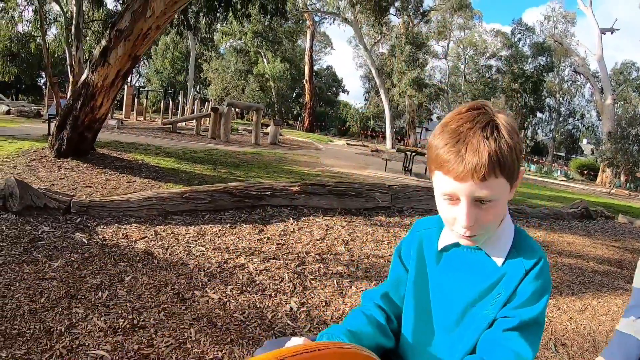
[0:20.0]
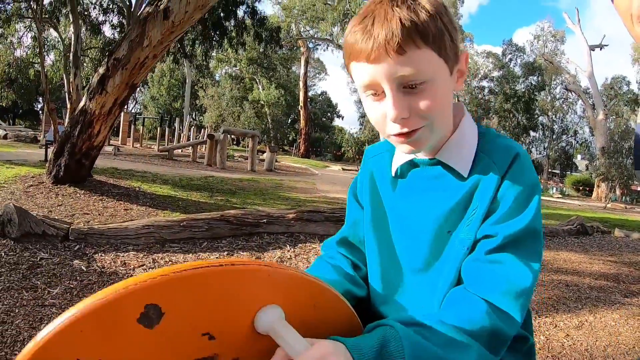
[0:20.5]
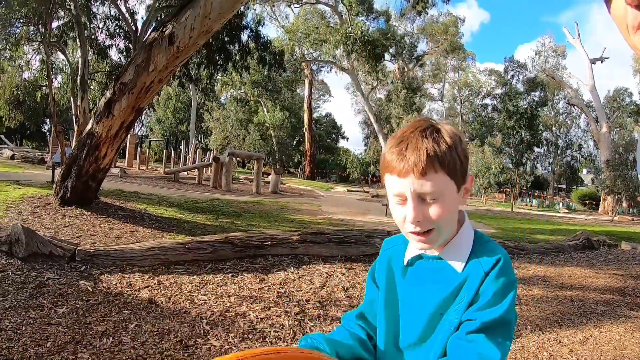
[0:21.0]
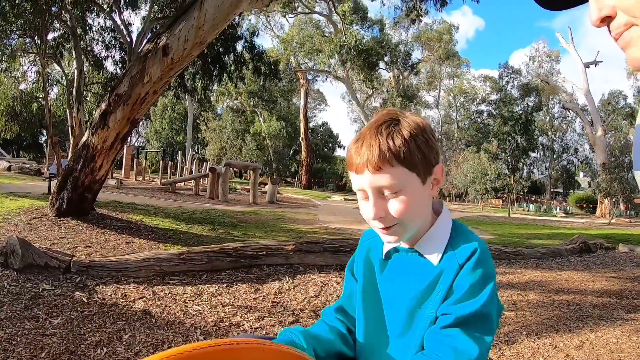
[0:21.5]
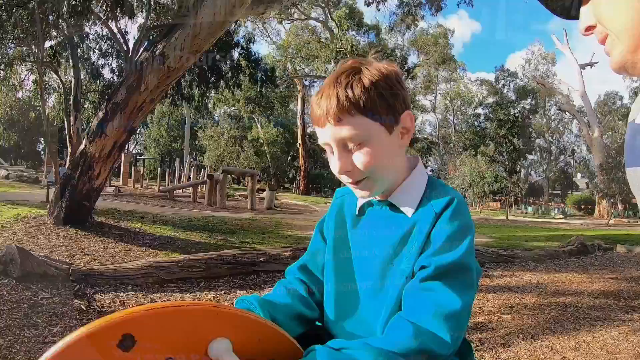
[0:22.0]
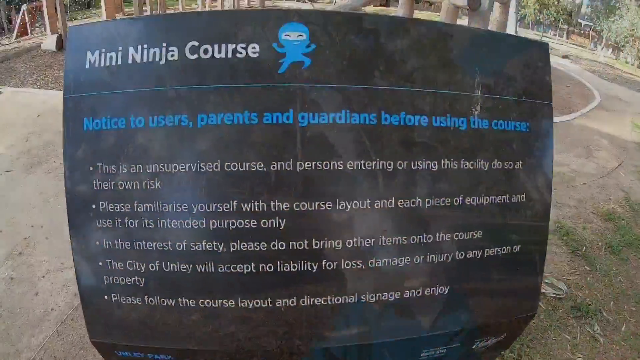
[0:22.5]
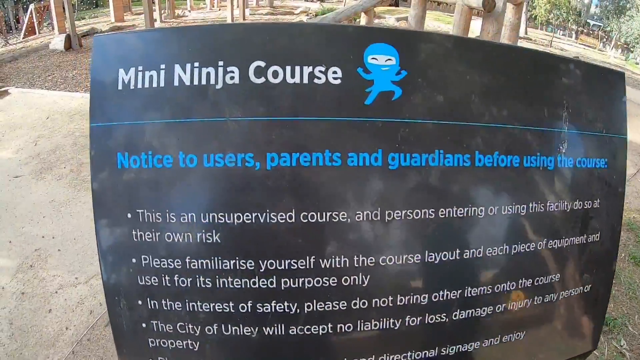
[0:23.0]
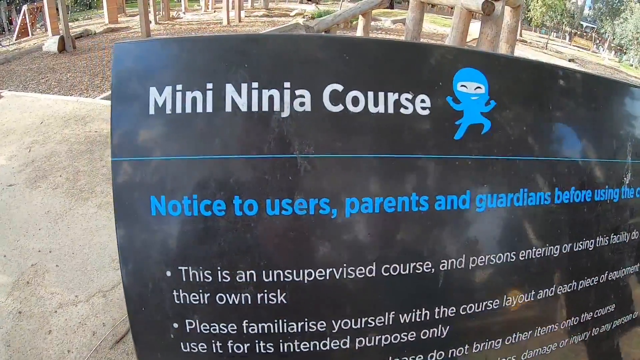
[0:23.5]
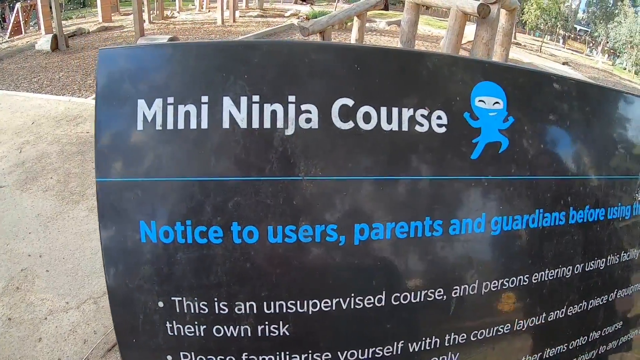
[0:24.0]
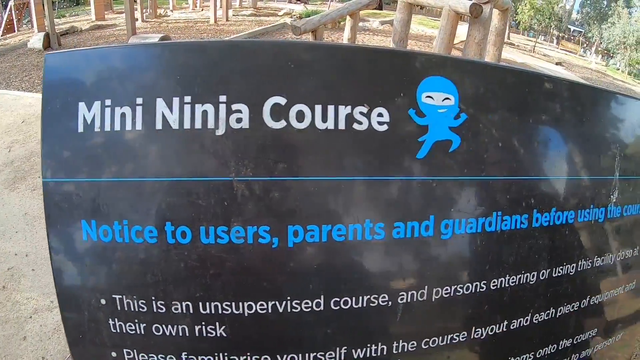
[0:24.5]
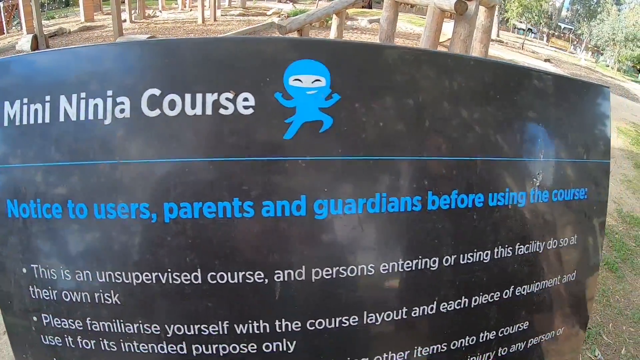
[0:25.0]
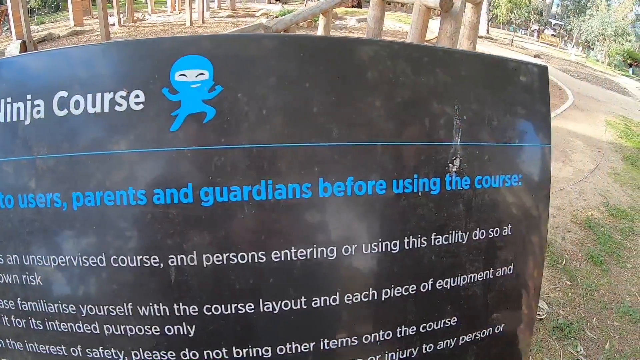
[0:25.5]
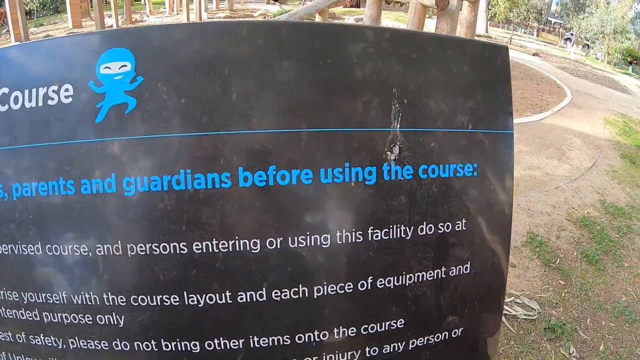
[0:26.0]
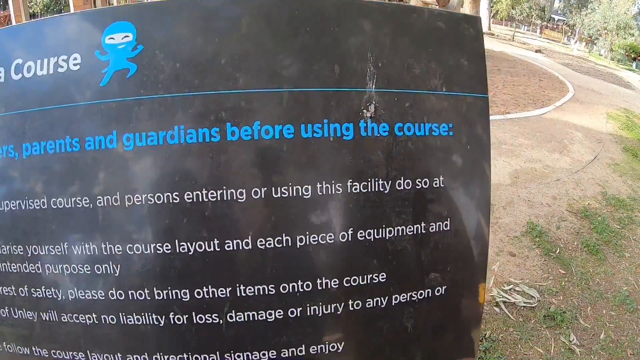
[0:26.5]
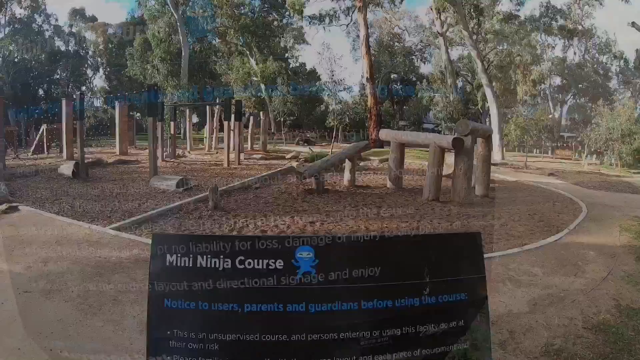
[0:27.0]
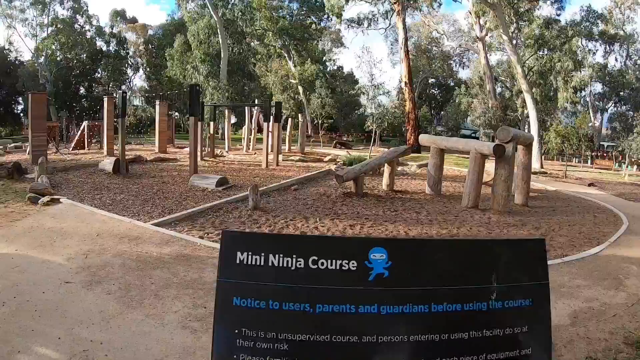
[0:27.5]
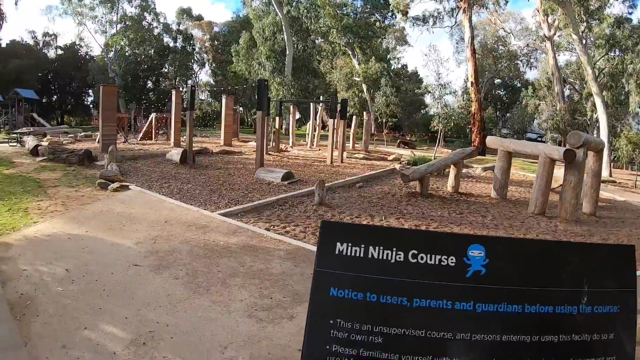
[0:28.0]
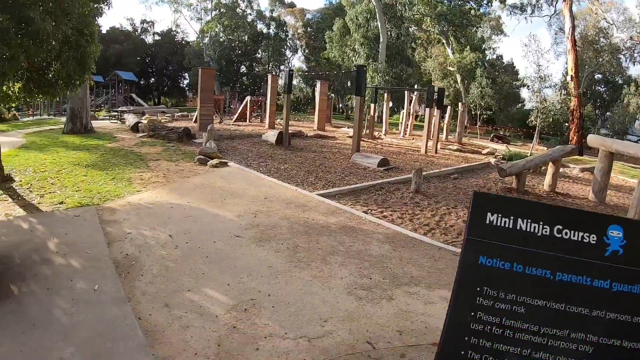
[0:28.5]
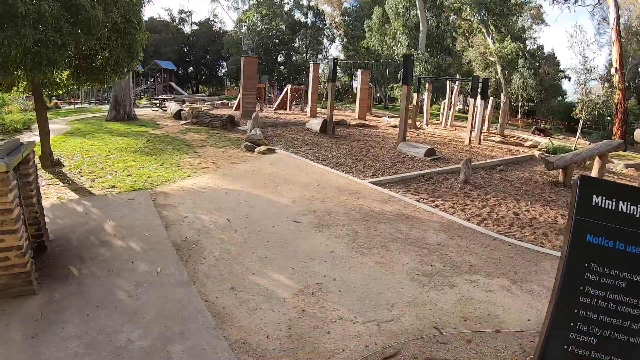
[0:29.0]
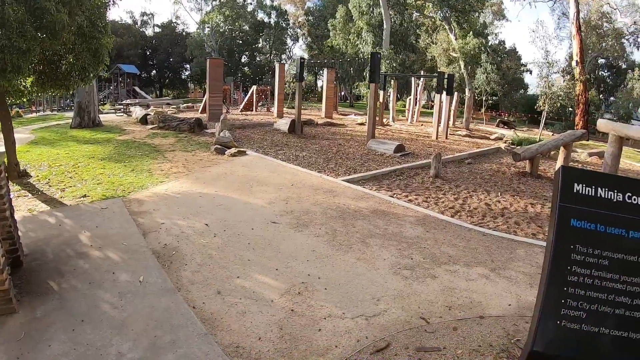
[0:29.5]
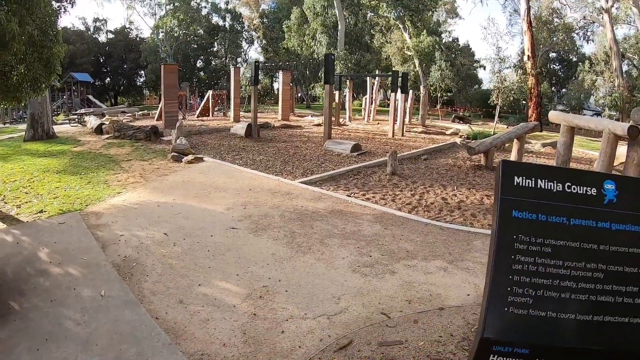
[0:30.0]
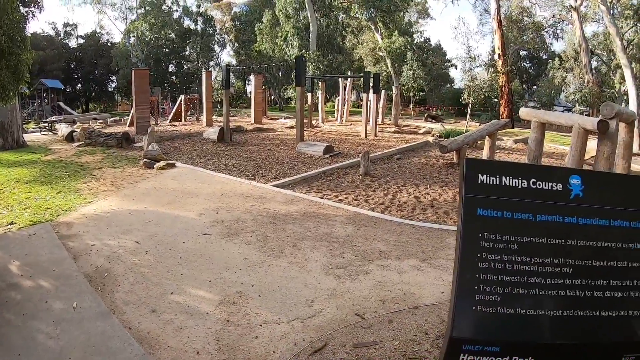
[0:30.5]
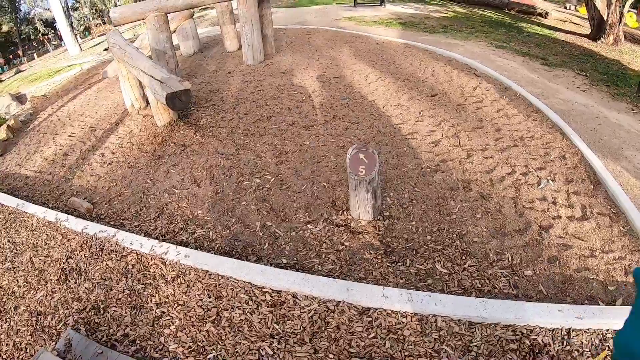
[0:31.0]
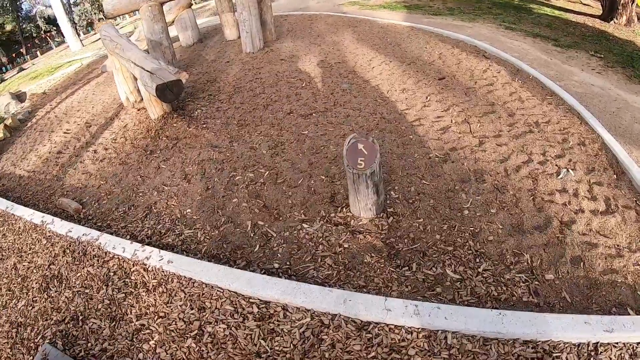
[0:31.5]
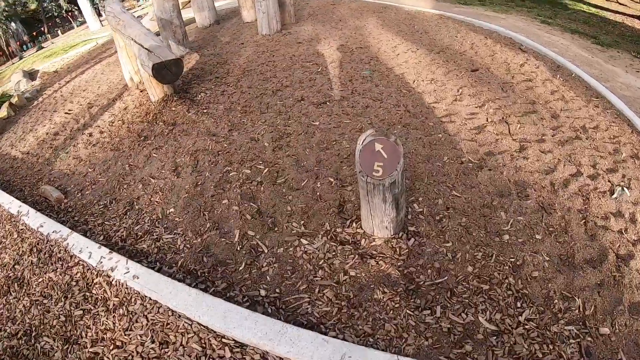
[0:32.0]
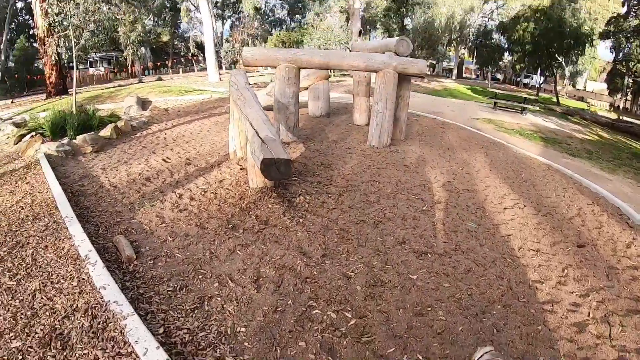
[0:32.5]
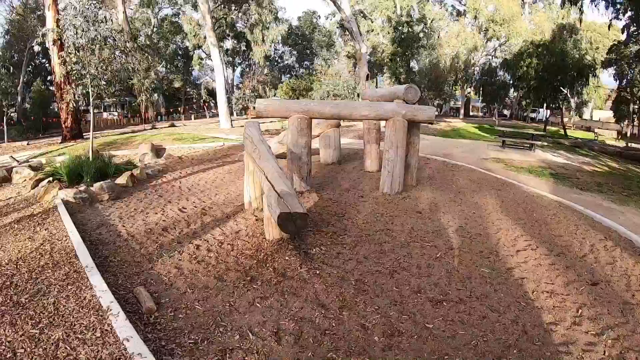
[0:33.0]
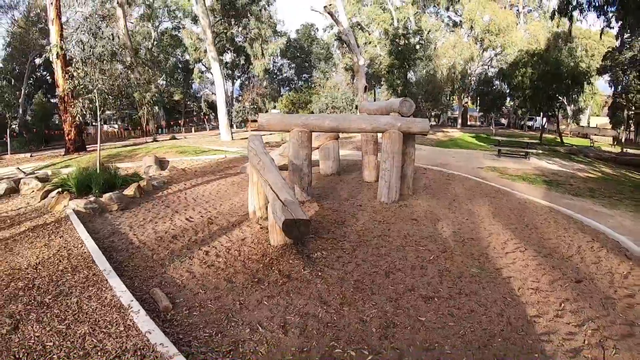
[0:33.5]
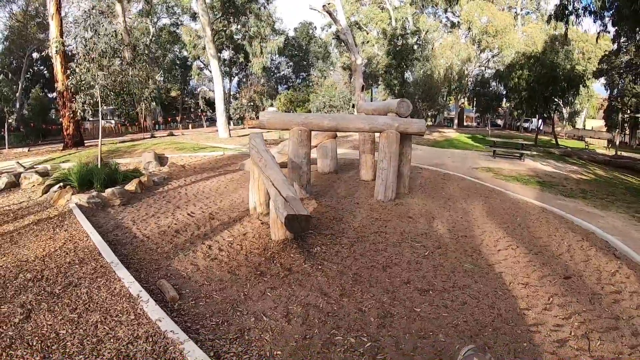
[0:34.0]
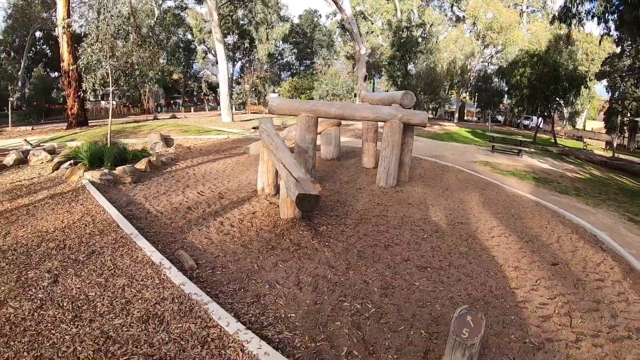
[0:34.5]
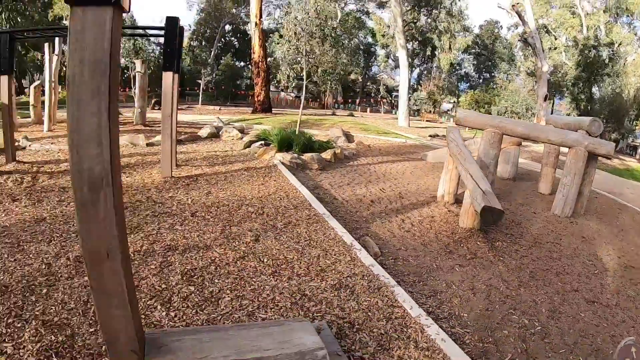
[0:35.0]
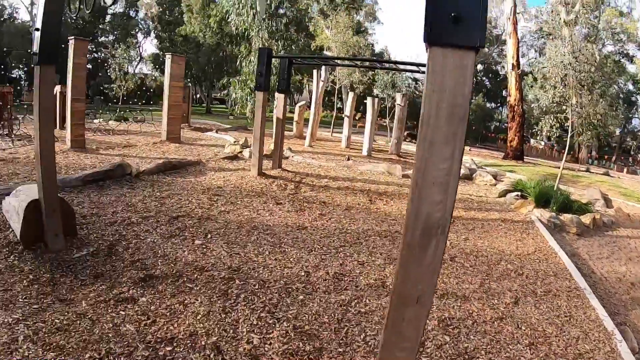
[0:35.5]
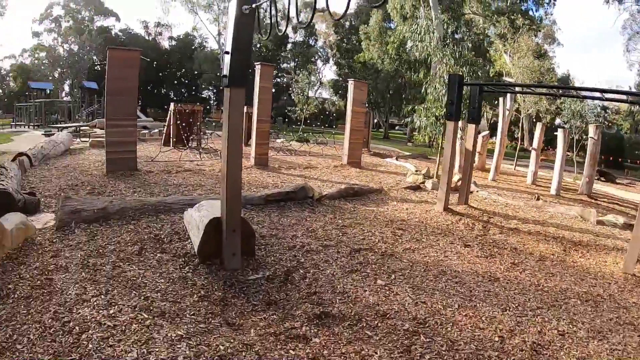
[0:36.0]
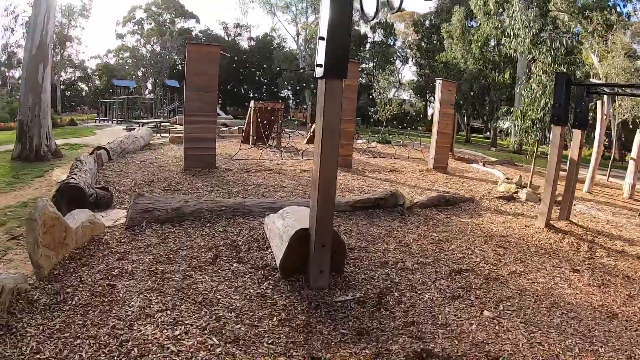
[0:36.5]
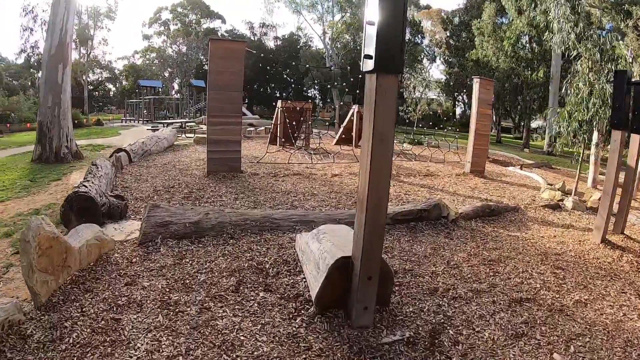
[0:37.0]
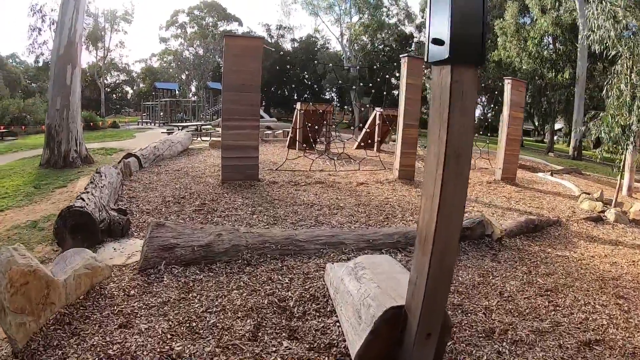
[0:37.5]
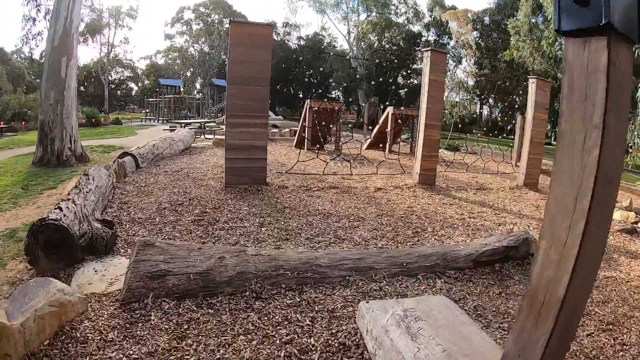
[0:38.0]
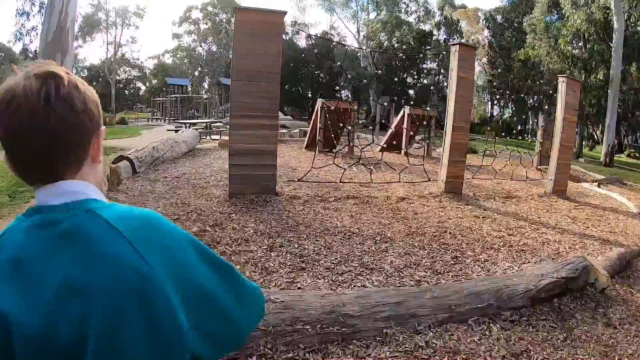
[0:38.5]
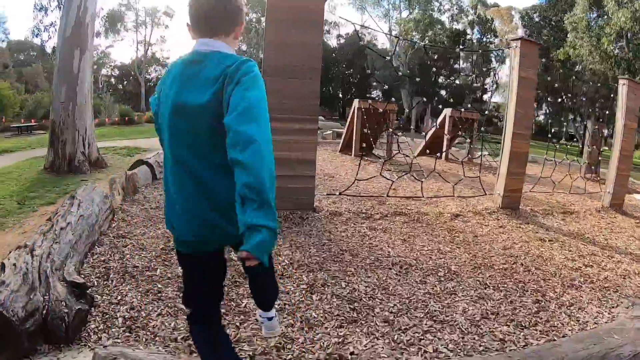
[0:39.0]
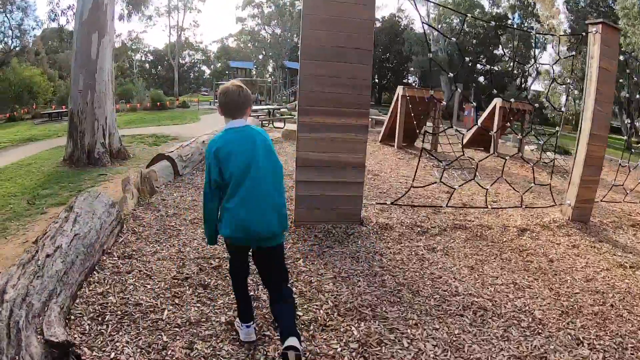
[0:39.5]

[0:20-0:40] The camera looks at the boy, who has red hair and pale skin and wears an azure blue sweater or top with a collar over a shirt. Behind him is a landscaped area that looks like a park, with several playground features scattered around, some picnic tables and several walking paths. The sky is a brilliant blue that matches the boy's sweater, there are lots of trees, and there is plenty of light. The boy goes up and down on the seesaw. The camera then cuts to a sign for a "mini ninja course" with a little blue ninja figure; the sign reads "Notice to users parents and guardians" and says that this is an unsupervised course. The camera pans across the course, whose features are built from what look like raw logs in different structures, and each feature appears to be numbered. Number five has a sand pit below logs arranged a little like Stonehenge or a jungle gym, but with raw wood, and looks like a place to climb. The camera turns around to another area, and the little boy jumps, eager to get to another area of the playground.